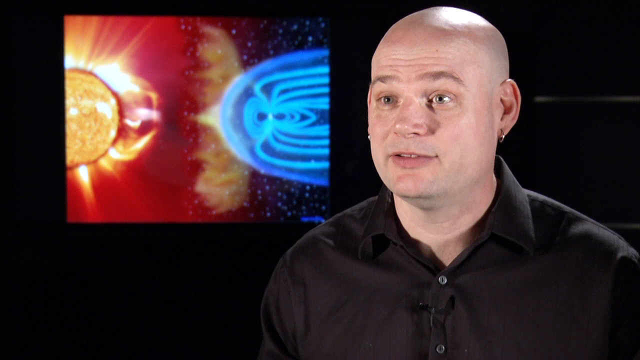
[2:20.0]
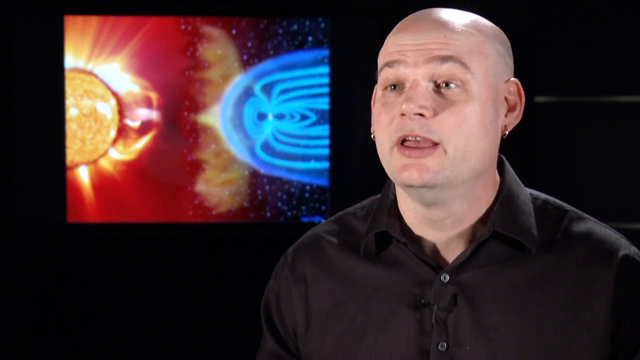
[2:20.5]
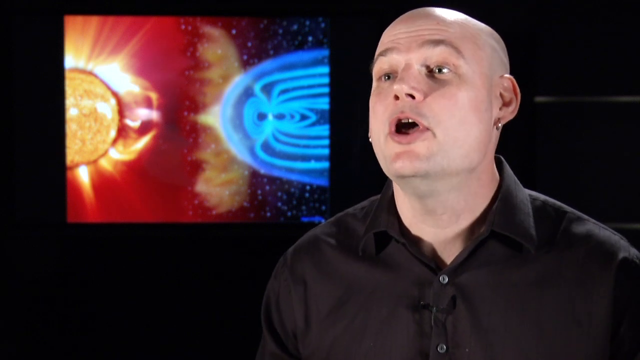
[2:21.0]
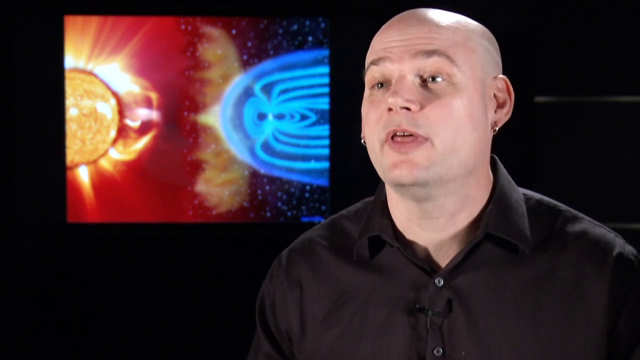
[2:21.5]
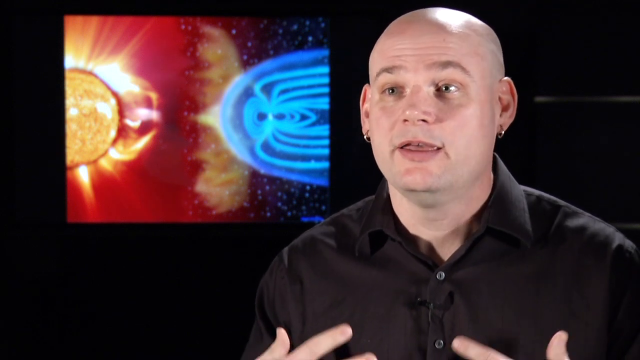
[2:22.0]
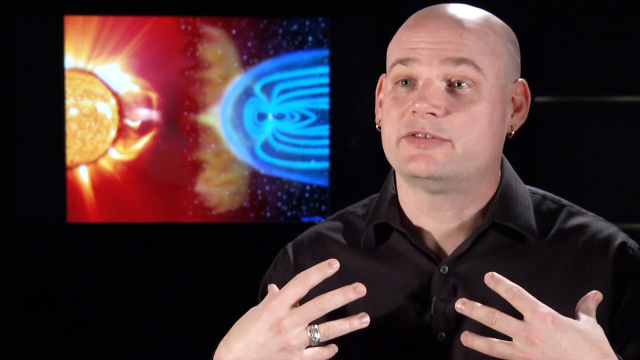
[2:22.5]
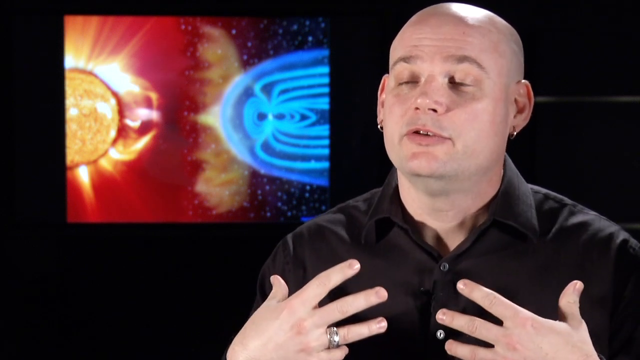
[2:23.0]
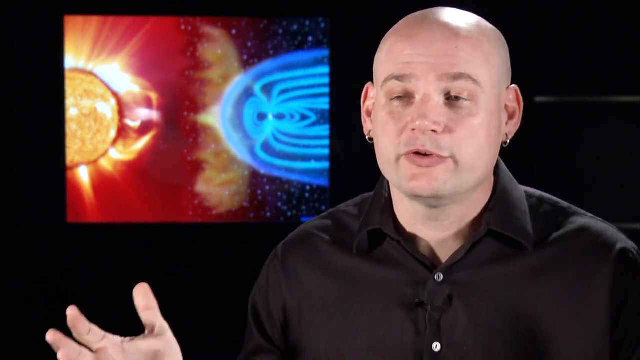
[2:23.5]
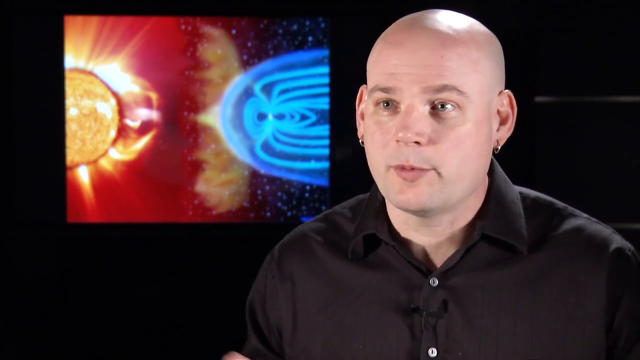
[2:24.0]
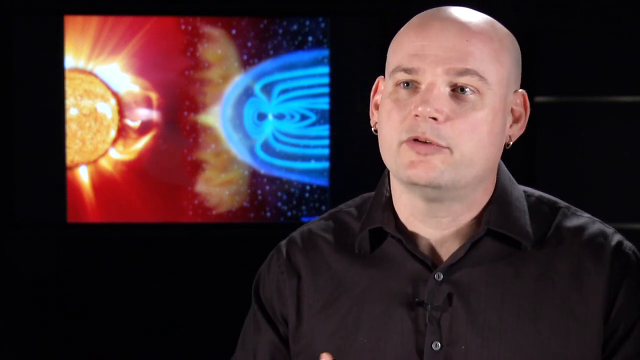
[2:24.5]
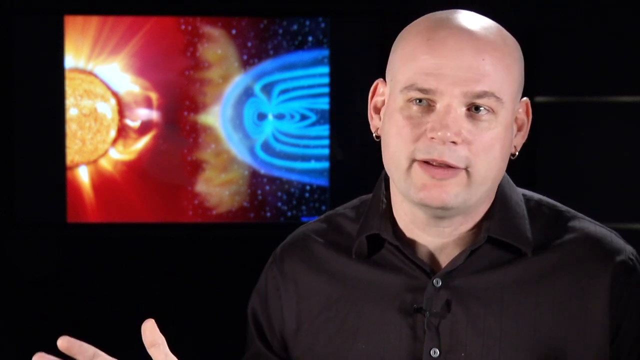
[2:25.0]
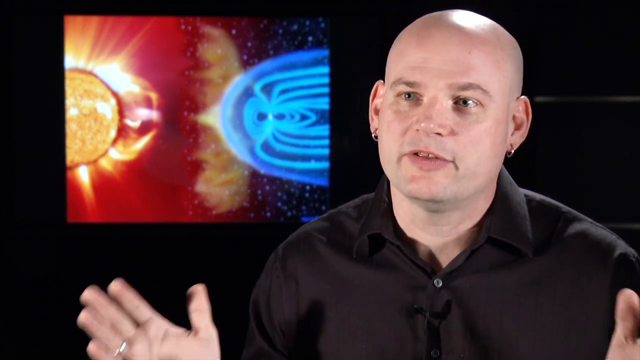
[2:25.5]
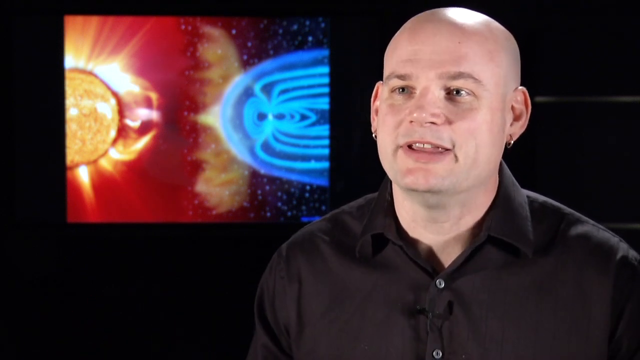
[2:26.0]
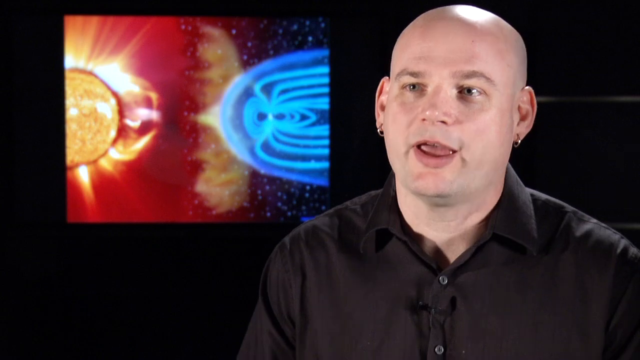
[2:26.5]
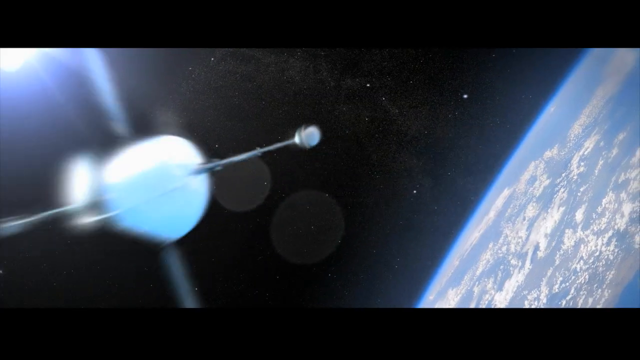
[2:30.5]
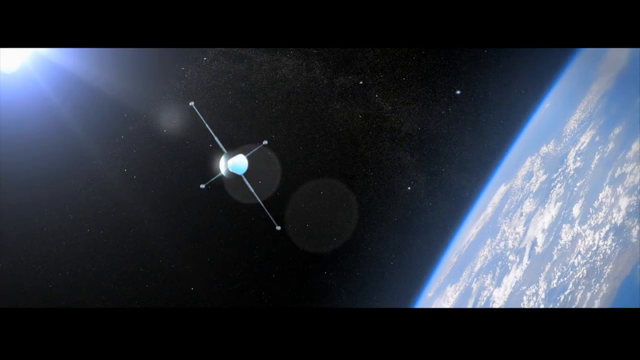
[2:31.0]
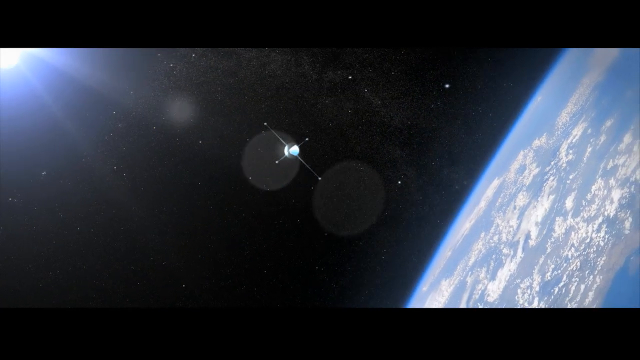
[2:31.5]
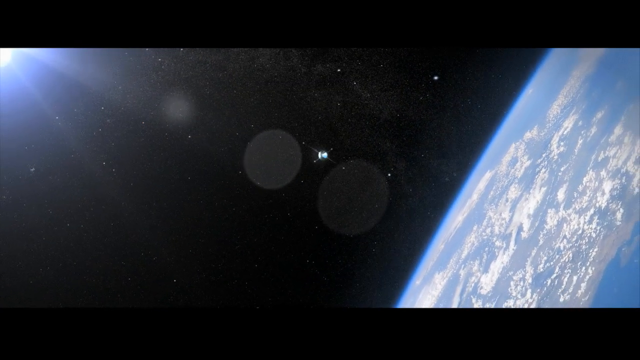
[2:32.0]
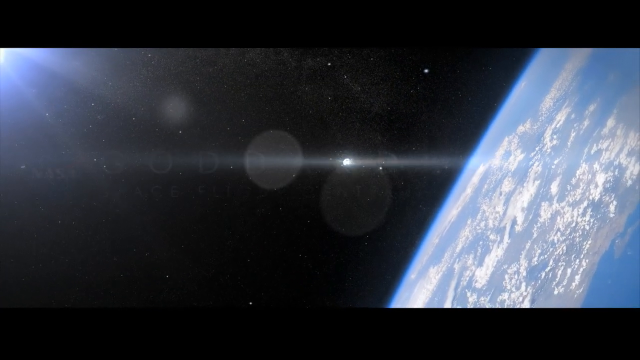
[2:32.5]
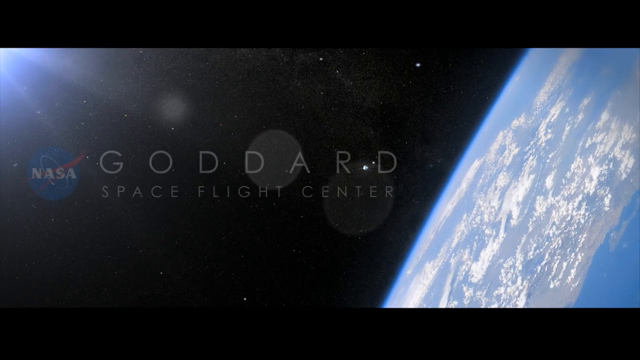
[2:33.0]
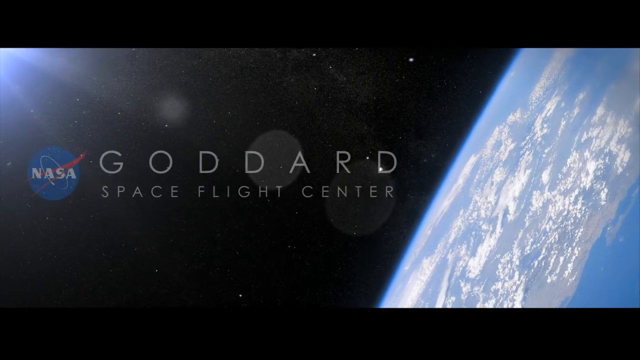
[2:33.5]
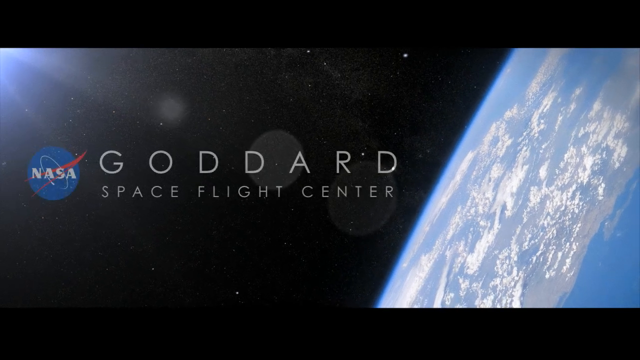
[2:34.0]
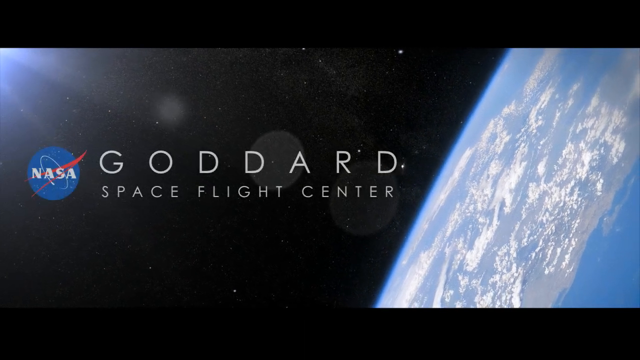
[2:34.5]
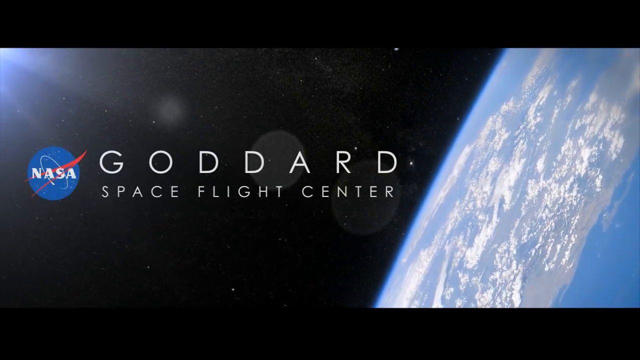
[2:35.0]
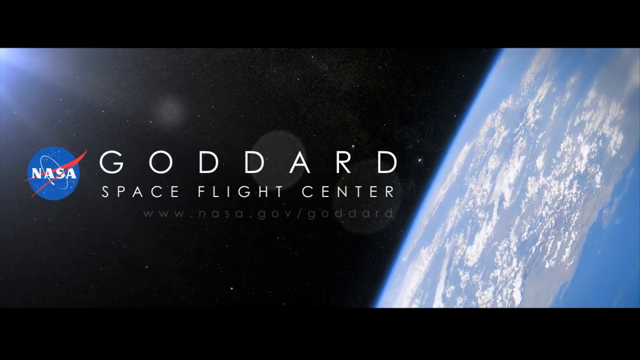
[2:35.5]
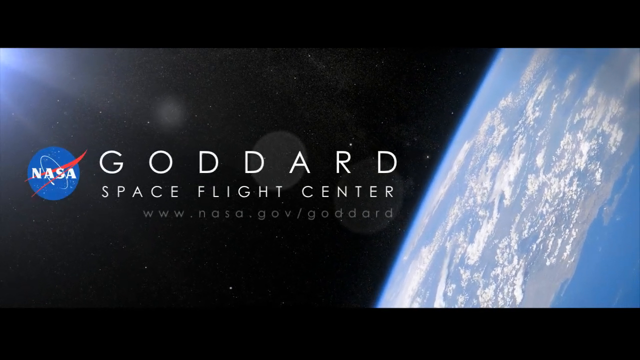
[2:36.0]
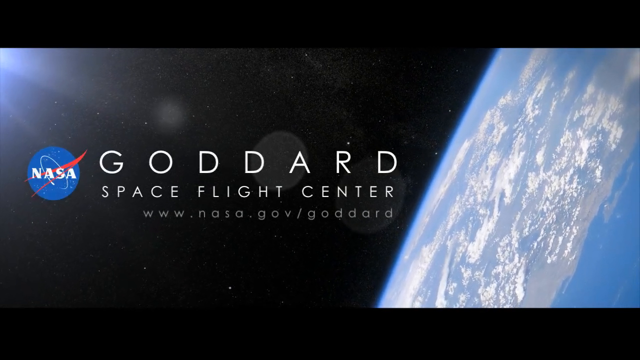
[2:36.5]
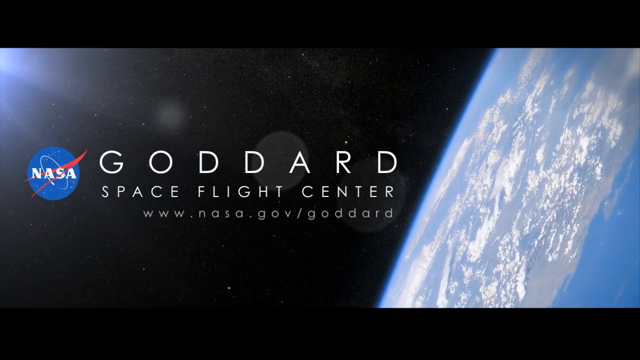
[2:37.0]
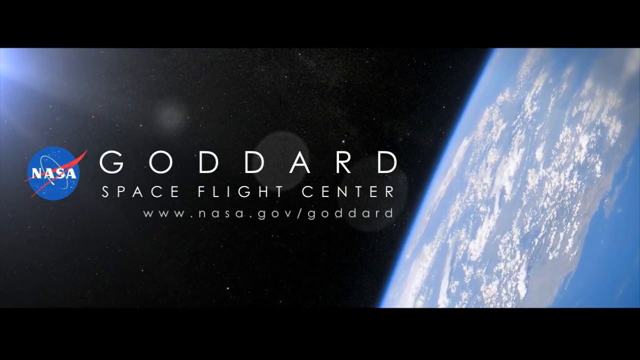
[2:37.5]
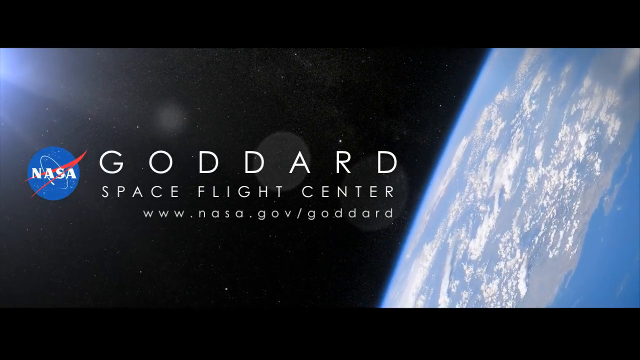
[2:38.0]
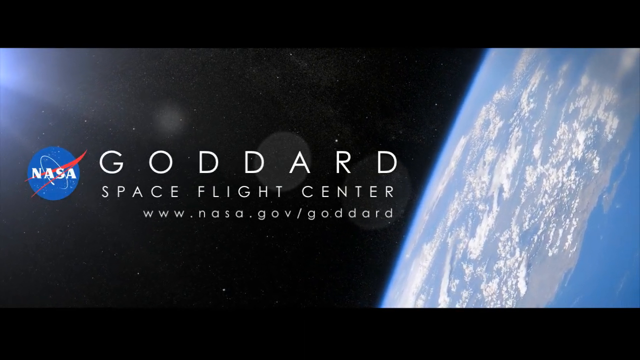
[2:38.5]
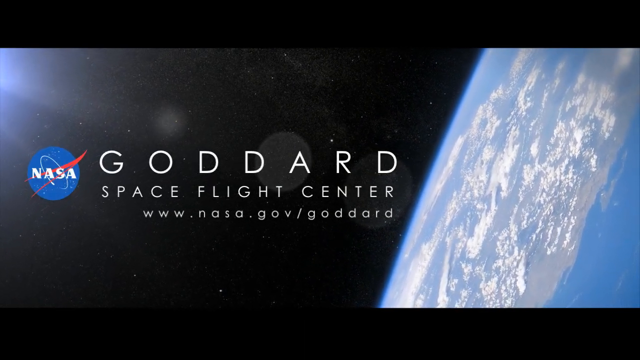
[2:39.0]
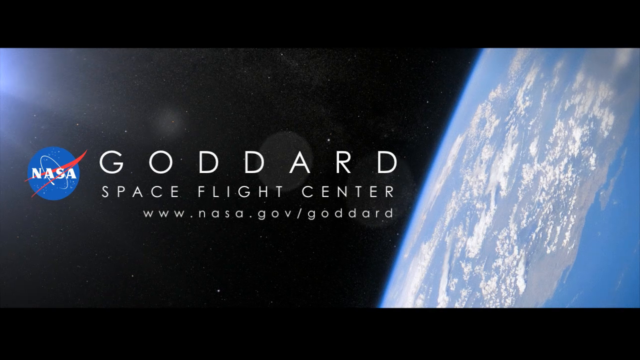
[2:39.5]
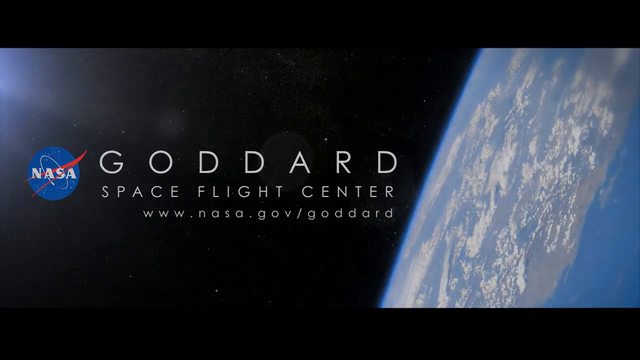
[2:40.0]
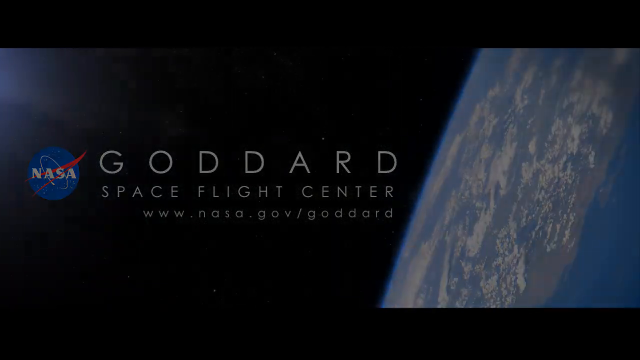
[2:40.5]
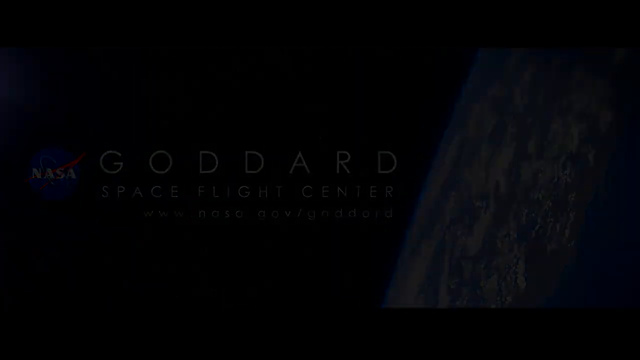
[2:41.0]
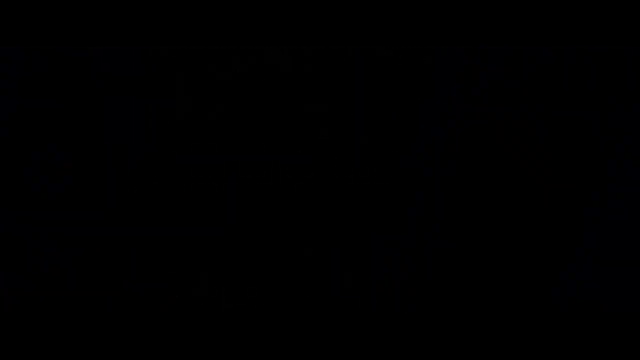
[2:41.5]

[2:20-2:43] The man talks on the right side, looking toward the left and moving his hands. He wears a black shirt. Behind him, on the left side of the black wall, is a picture of what looks like an example of a solar flare. The scene changes to an all-black screen, and a satellite appears on the left side in space with the Earth to the right. The satellite travels very fast, taking off quickly in what looks like the direction of the Earth, and is gone. On the left, text reads "Goddard Space Flight Center" with a NASA logo, and a website appears underneath: "www.nasa.gov/goddard." Only empty outer space remains on the left, with the Earth on the right and some sunlight coming from the top left corner.